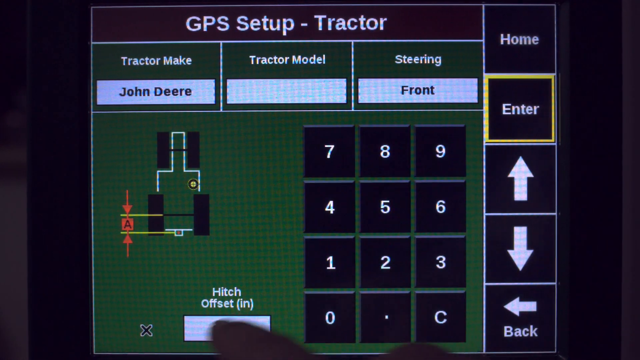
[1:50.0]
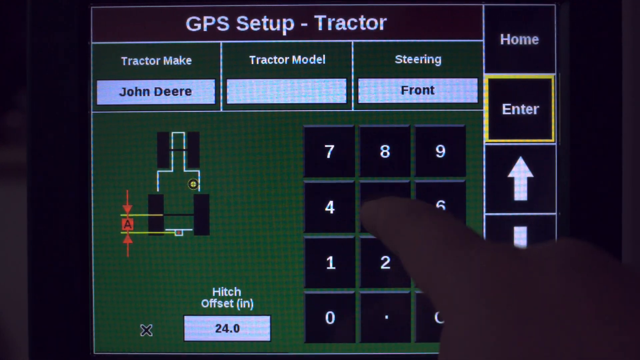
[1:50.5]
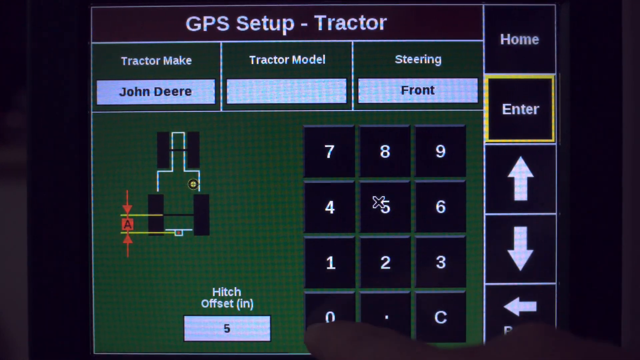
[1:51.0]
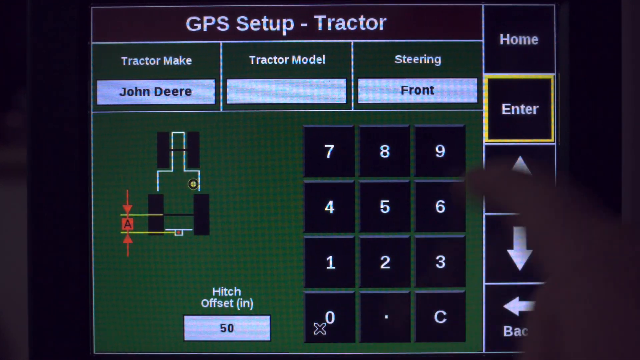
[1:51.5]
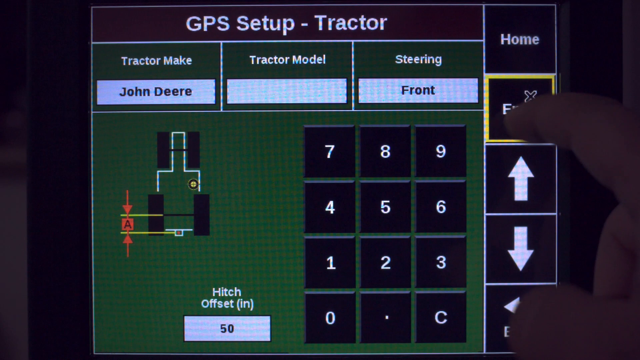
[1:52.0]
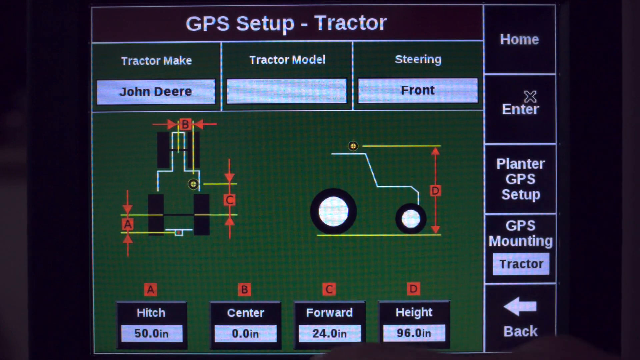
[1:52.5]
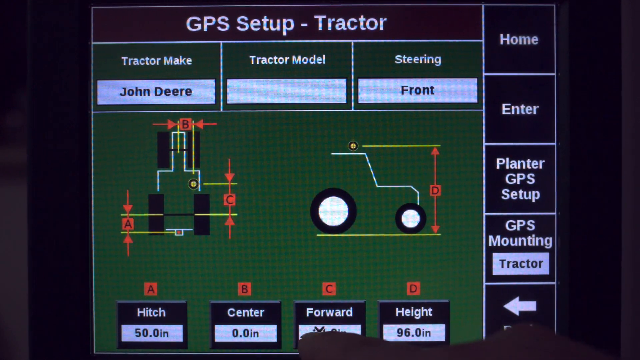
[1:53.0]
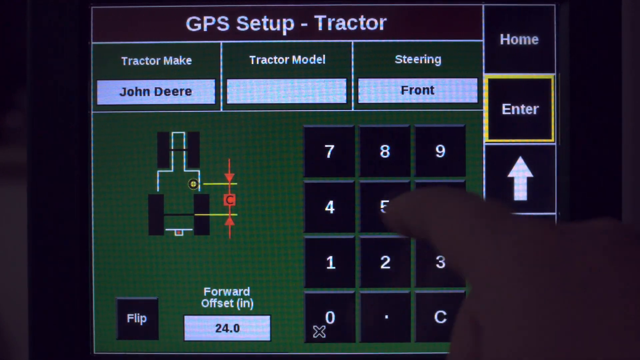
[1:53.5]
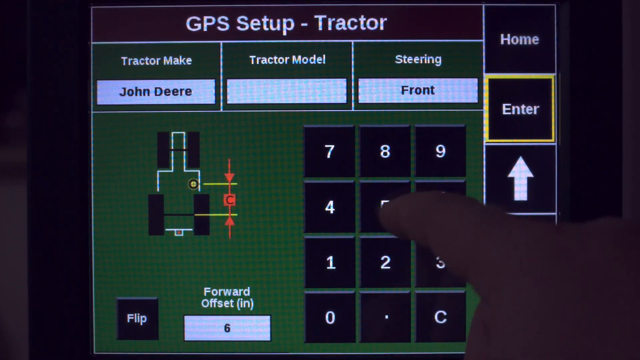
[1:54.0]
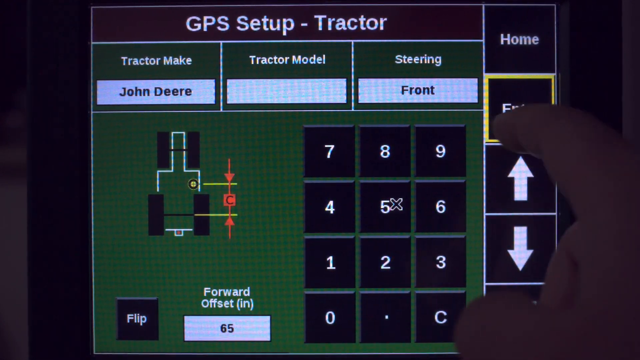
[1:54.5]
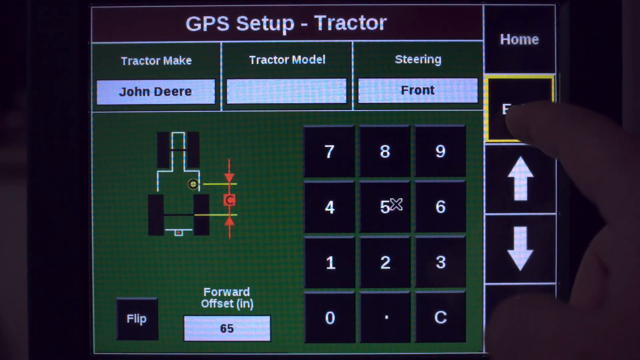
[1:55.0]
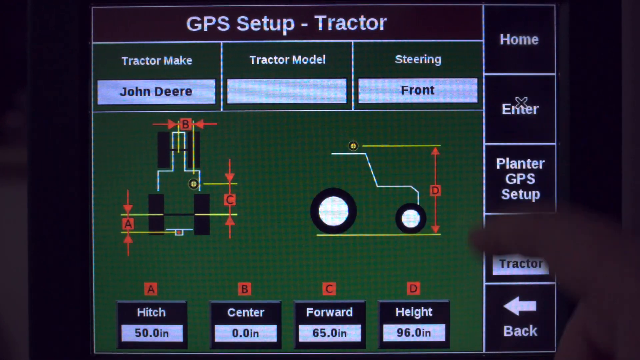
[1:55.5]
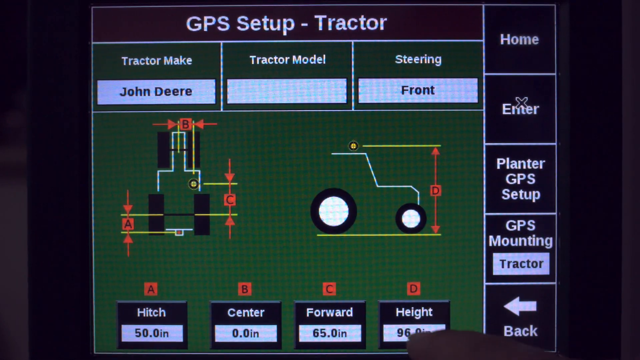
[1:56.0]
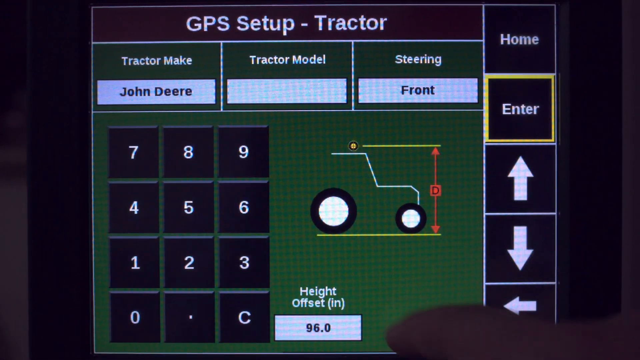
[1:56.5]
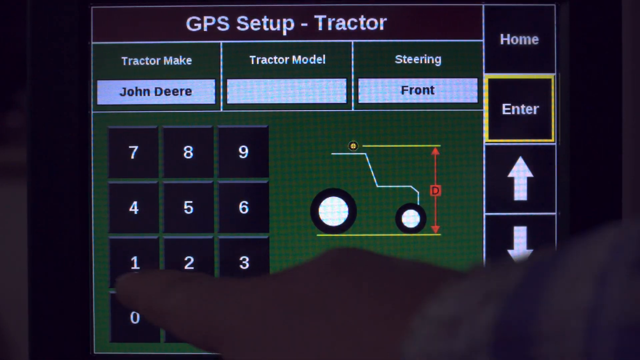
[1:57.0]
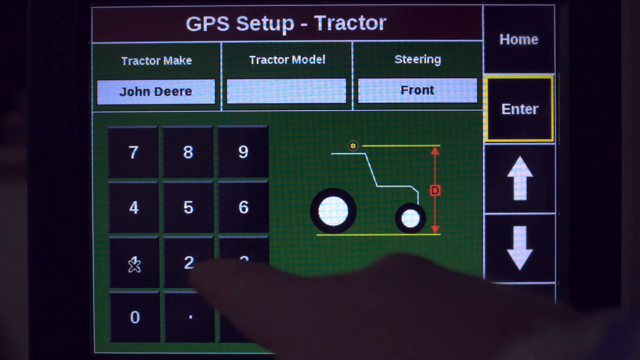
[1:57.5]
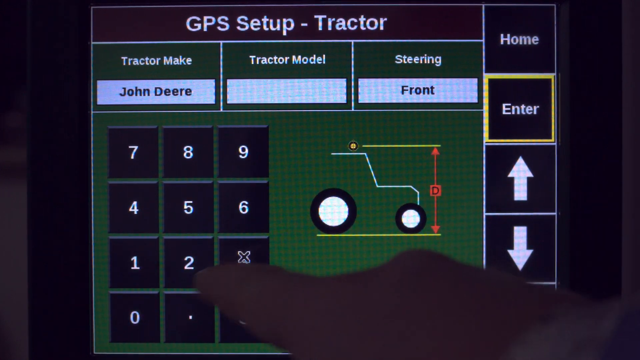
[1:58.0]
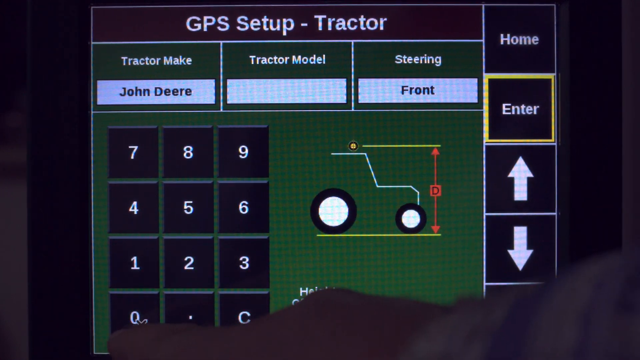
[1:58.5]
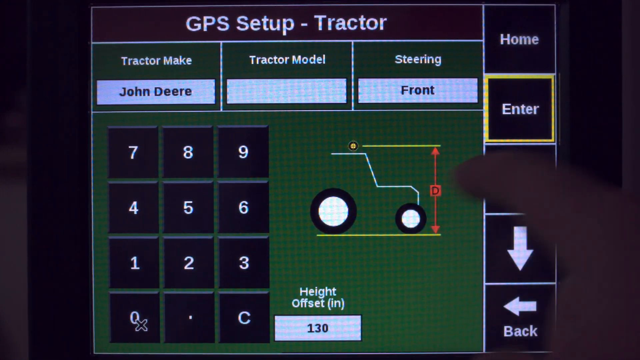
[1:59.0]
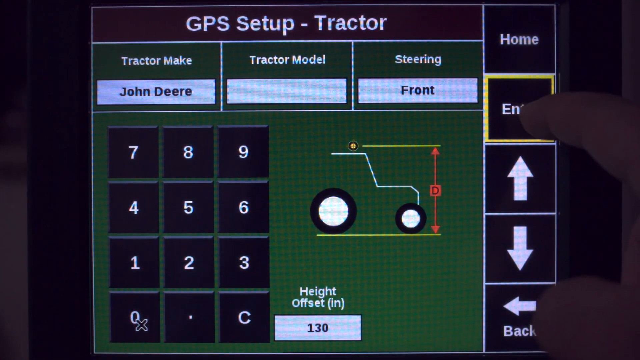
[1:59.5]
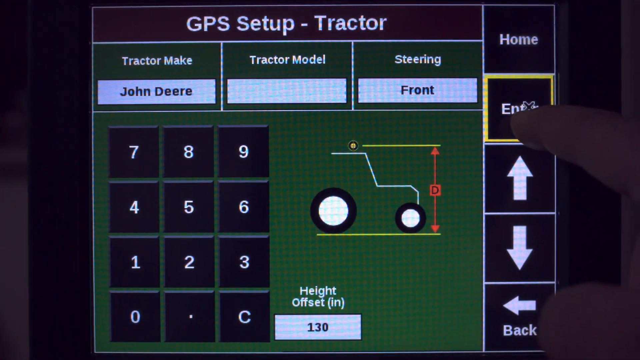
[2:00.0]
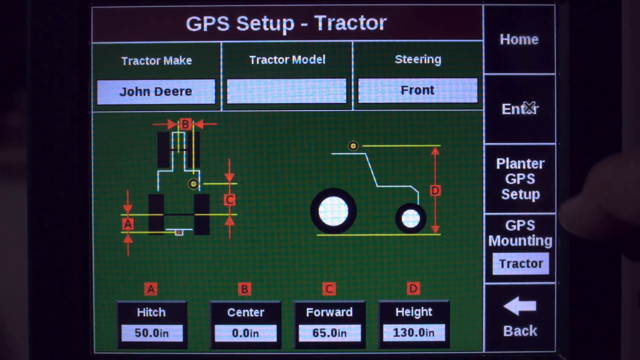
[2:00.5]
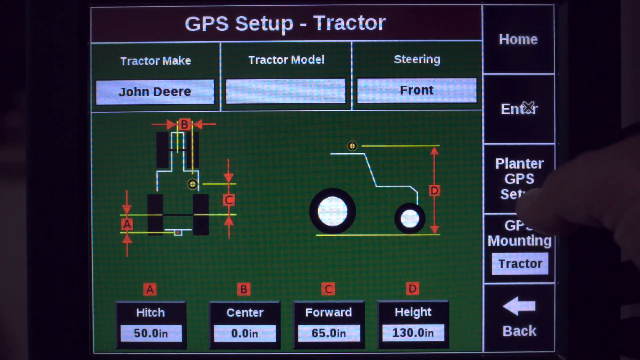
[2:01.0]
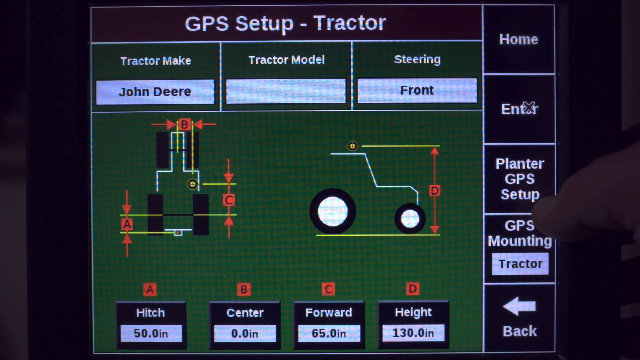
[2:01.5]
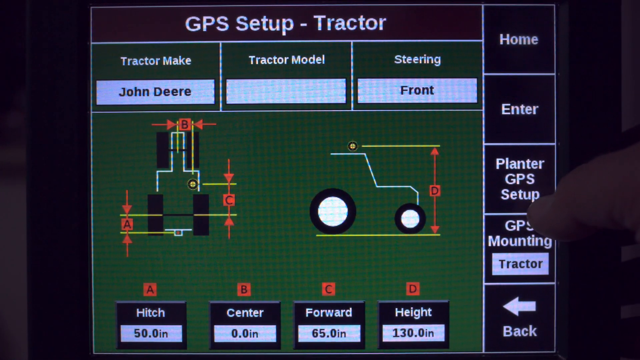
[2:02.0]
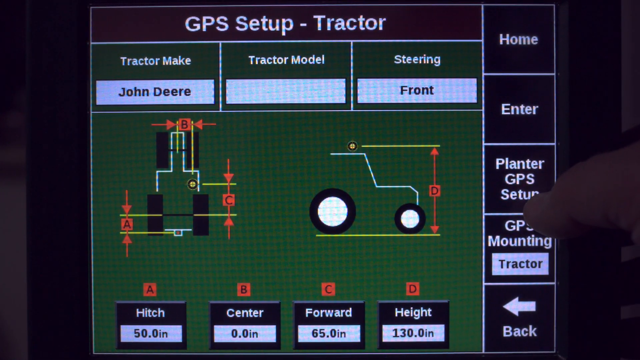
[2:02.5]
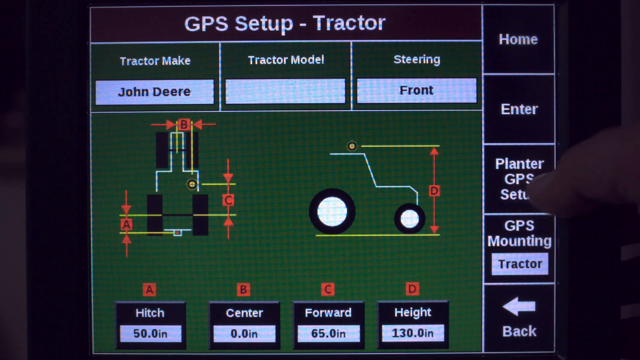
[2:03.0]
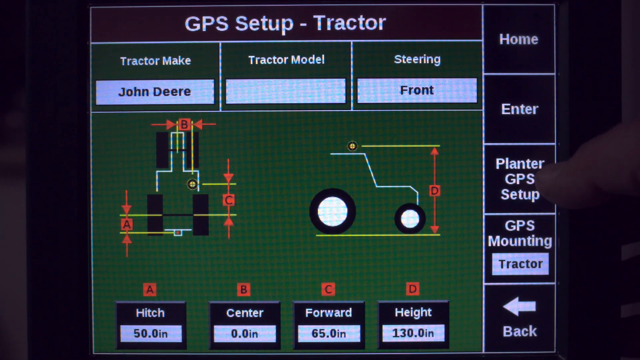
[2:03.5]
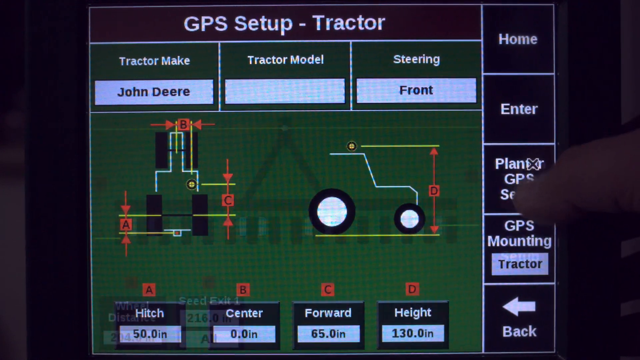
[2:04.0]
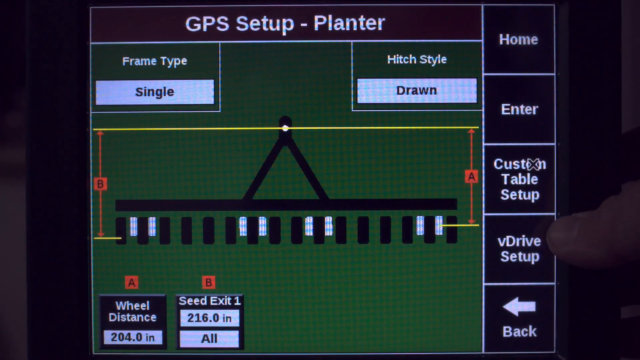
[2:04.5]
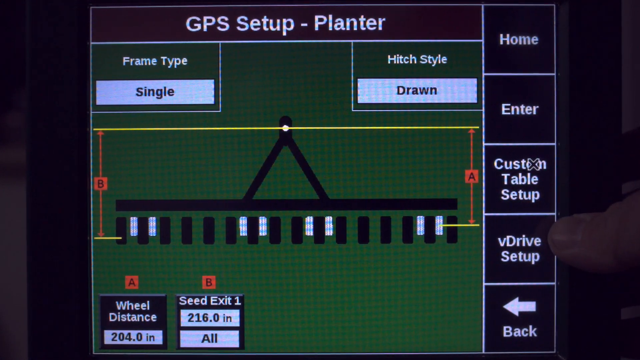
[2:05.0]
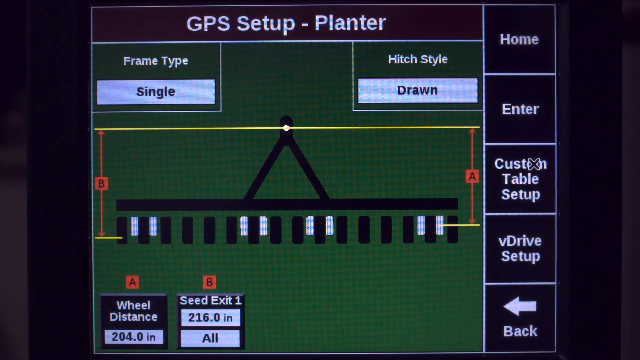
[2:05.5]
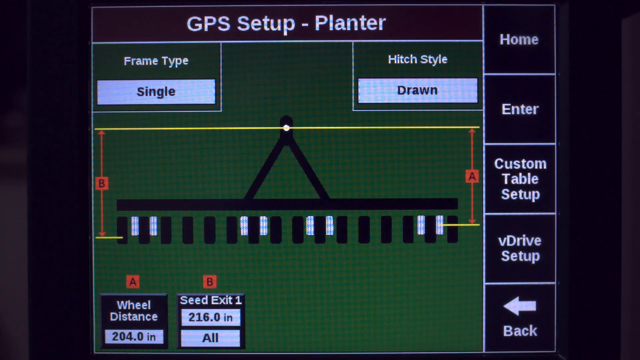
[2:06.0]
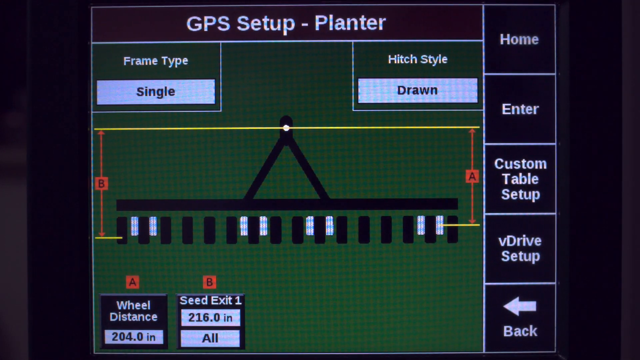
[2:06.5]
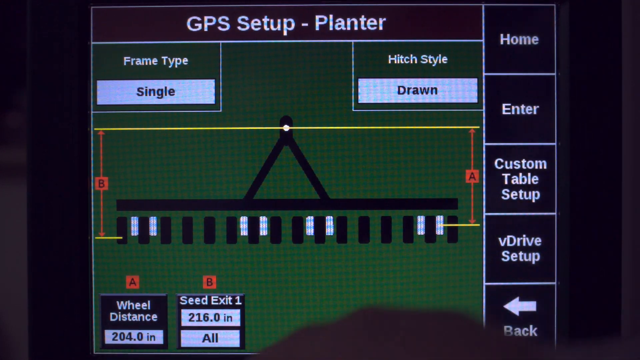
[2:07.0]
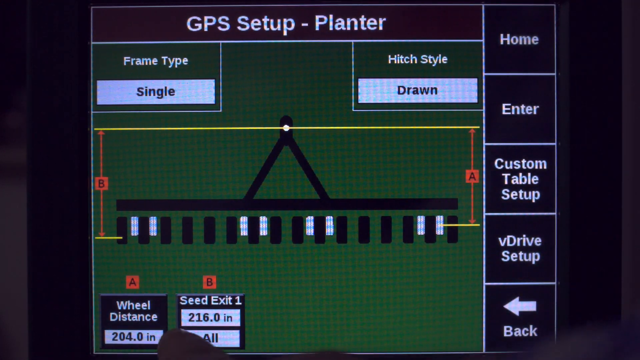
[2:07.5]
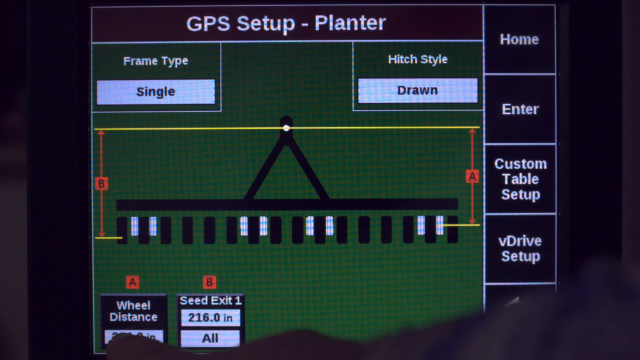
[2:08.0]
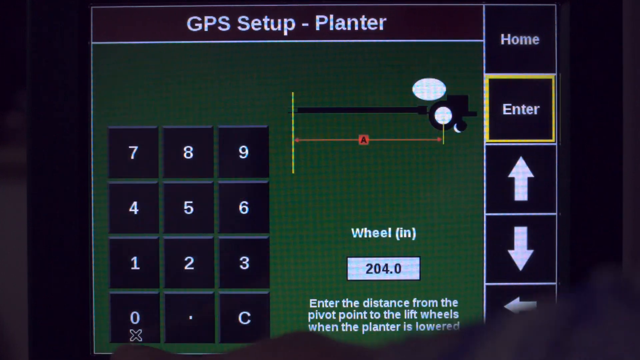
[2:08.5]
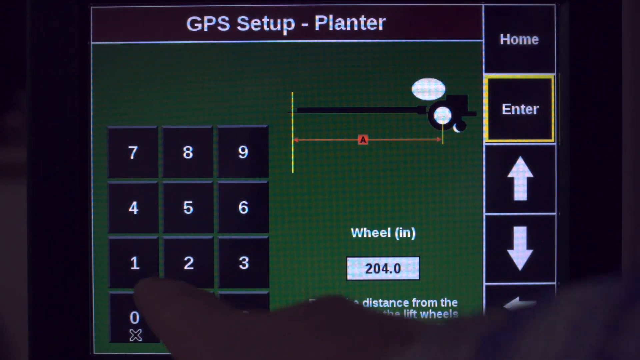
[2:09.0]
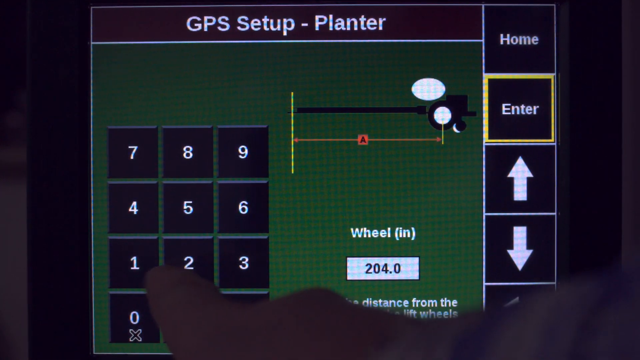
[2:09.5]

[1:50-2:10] A computer program, probably for farmers or growers, has a mostly black background with an inner portion in green. It says "GPS setup - tractor". Tractor make says "John Deere", tractor model is empty, and steering says "front". In the left middle area there is a diagram of a tractor showing its four wheels, with a white outline of the outside of the tractor. Toward the left there is a red marking with a capital A in the middle, and yellow lines go toward the back left tire. To the right are a home button and an enter button, with a yellow square around the word enter. Below those are an up button, a down arrow, and at the bottom an arrow pointing left. A grid toward the middle has 7, 8, 9 in the top row, 4, 5, 6 in the middle row, 1, 2, 3 in the bottom row, and 0 and C at the very bottom.